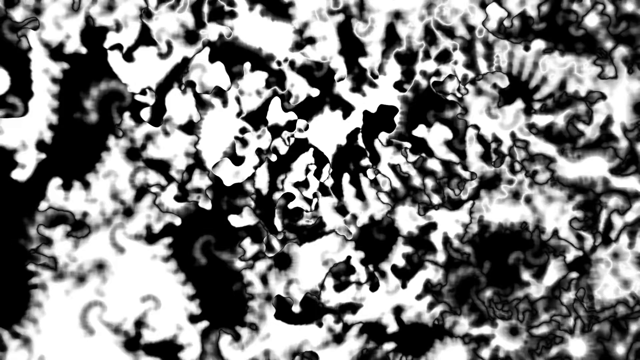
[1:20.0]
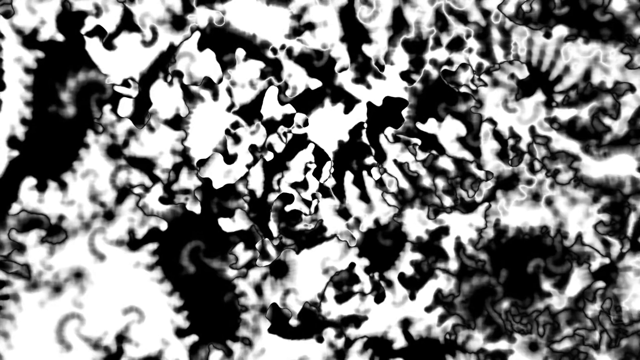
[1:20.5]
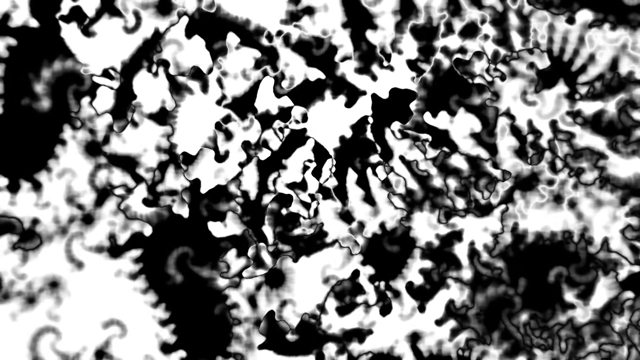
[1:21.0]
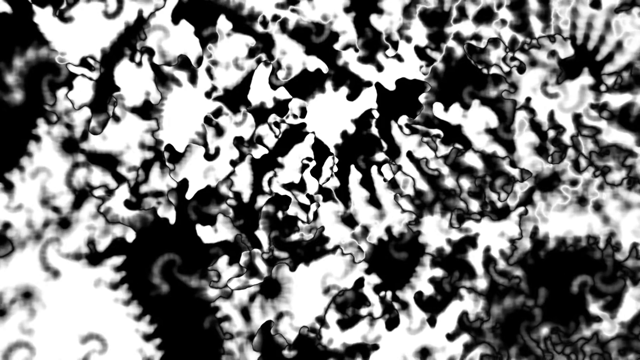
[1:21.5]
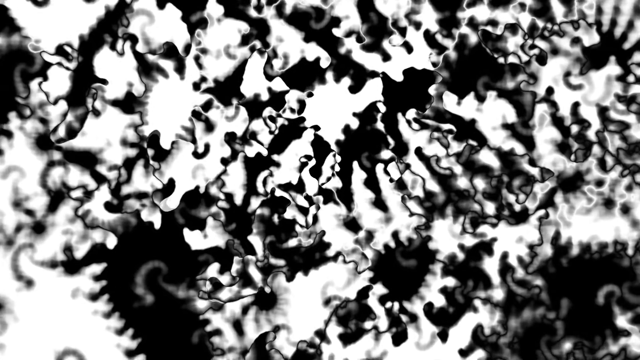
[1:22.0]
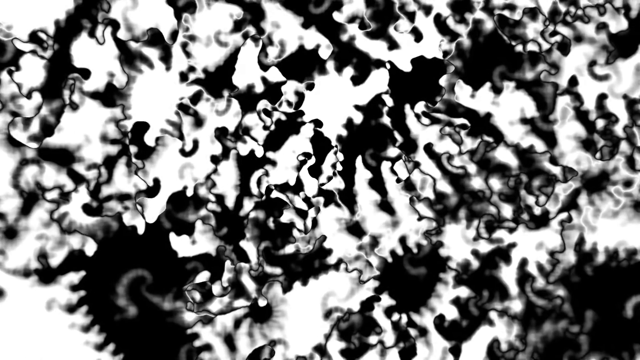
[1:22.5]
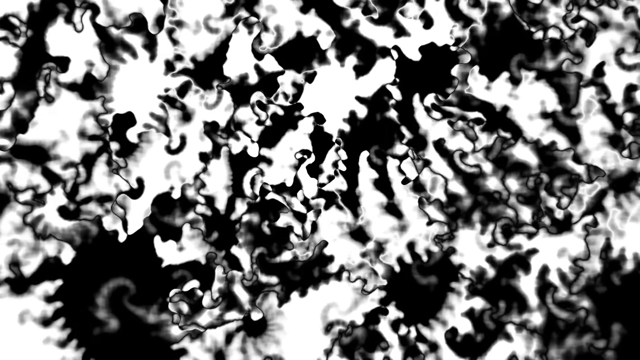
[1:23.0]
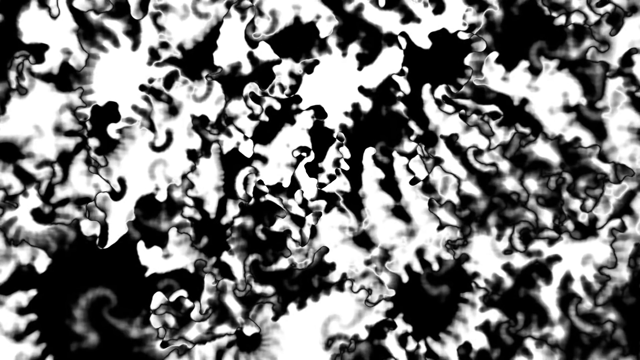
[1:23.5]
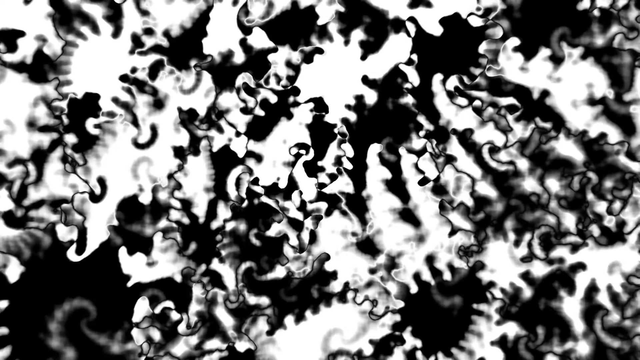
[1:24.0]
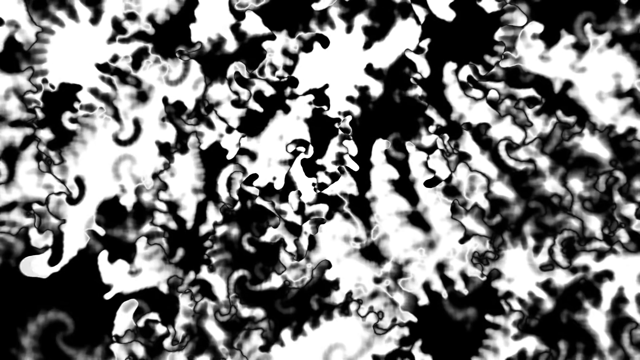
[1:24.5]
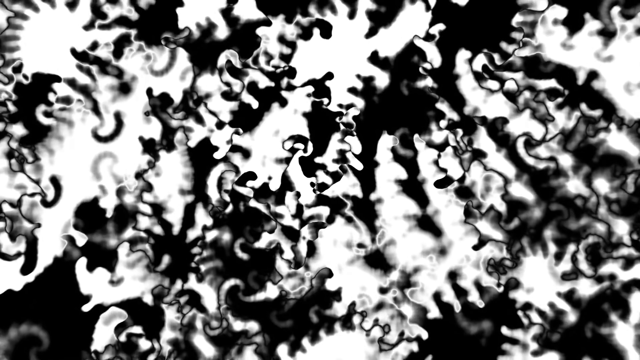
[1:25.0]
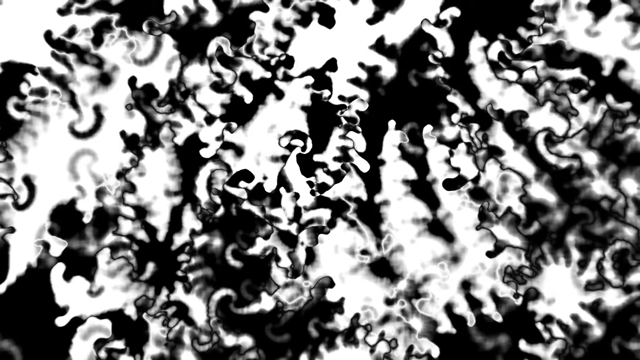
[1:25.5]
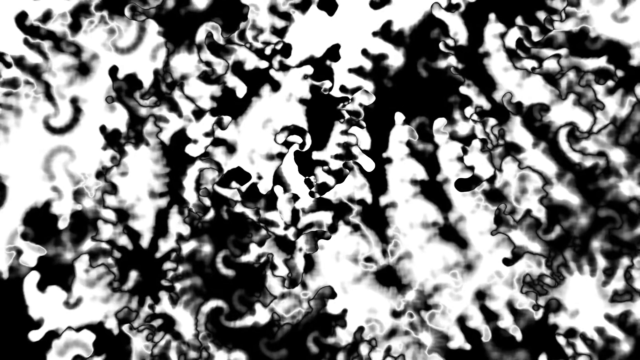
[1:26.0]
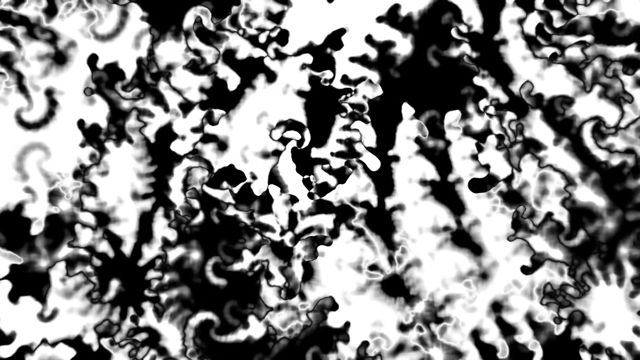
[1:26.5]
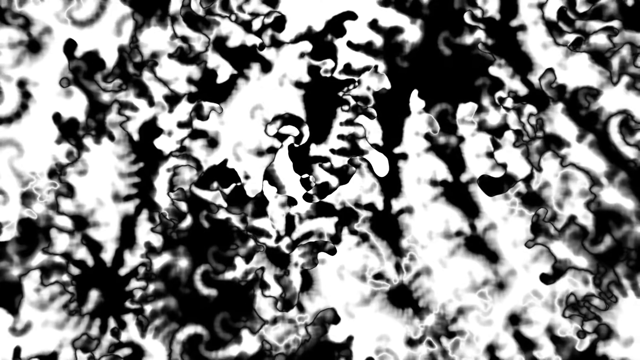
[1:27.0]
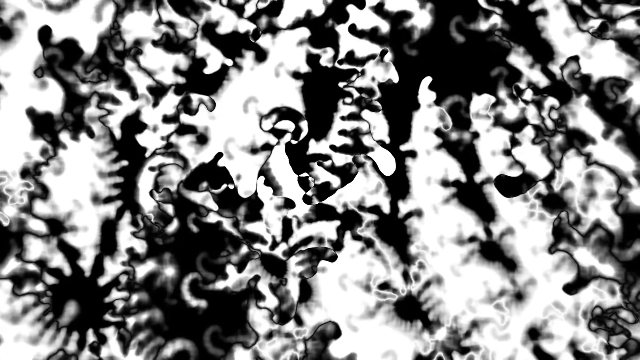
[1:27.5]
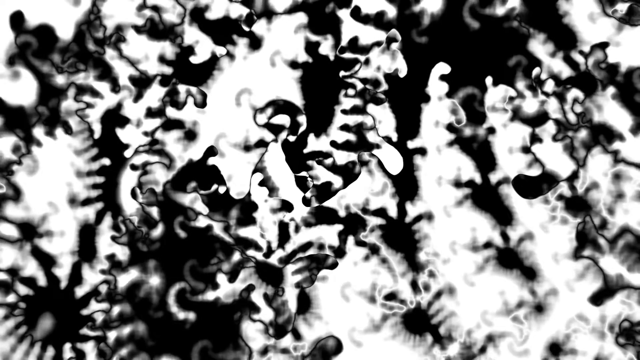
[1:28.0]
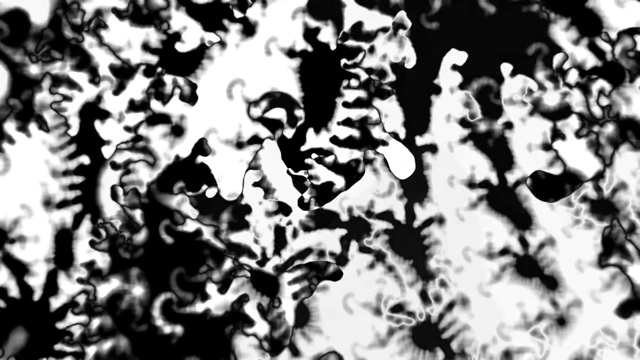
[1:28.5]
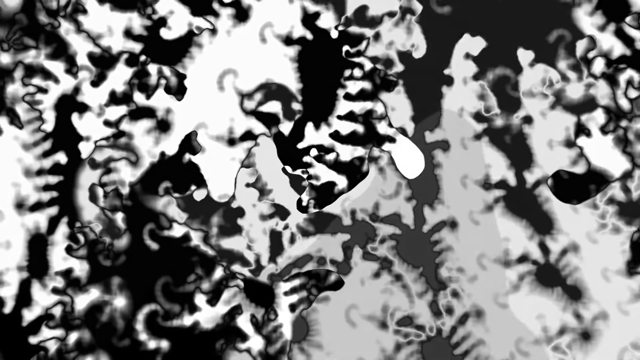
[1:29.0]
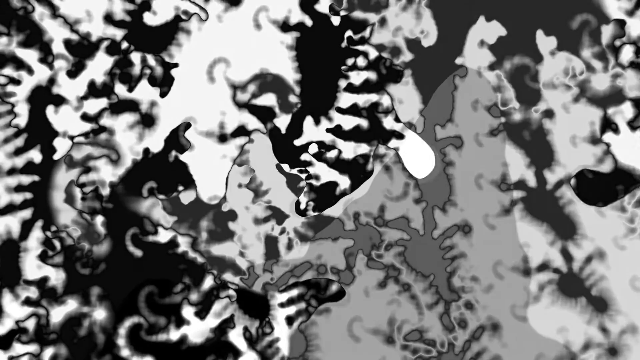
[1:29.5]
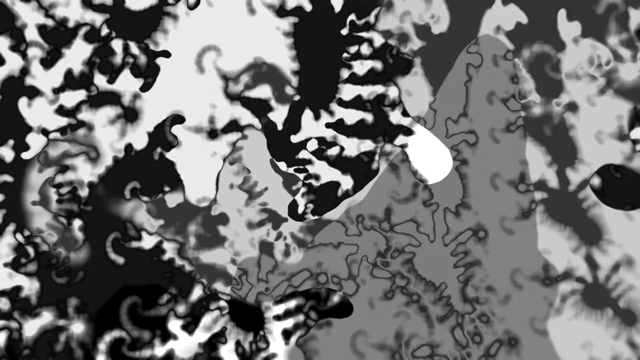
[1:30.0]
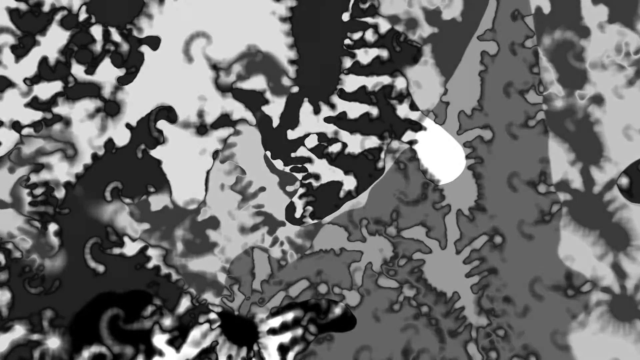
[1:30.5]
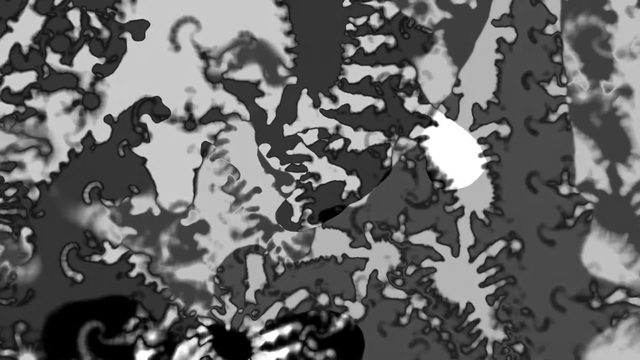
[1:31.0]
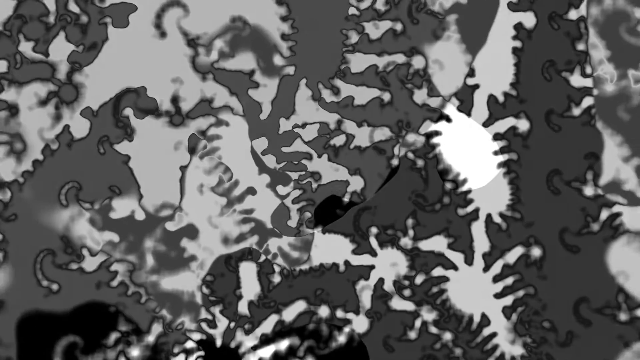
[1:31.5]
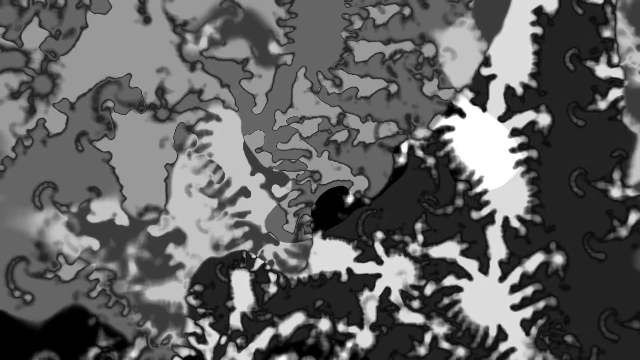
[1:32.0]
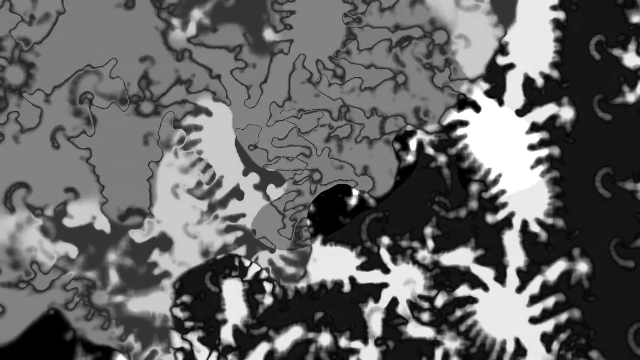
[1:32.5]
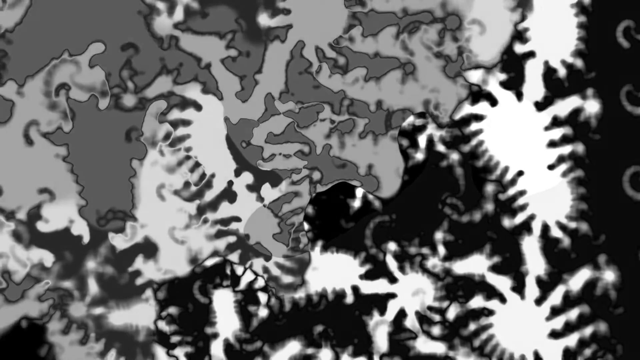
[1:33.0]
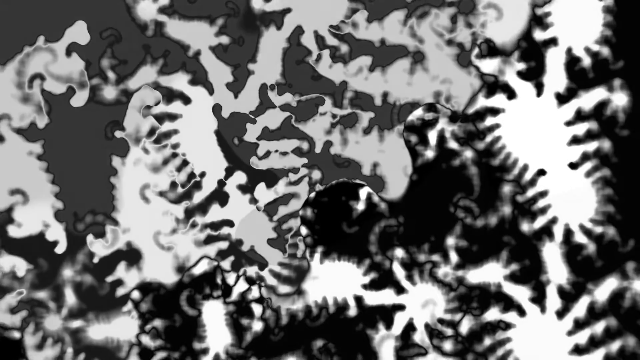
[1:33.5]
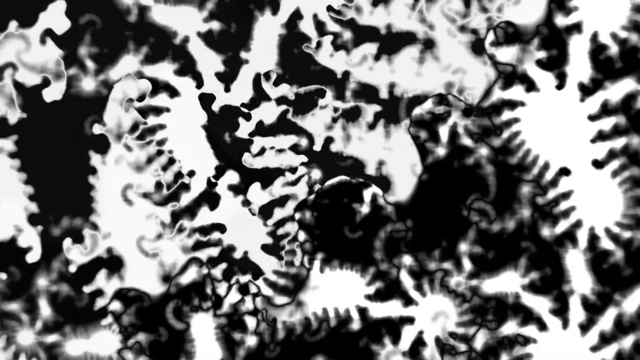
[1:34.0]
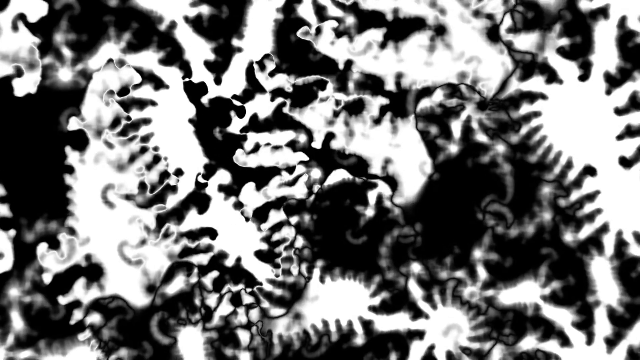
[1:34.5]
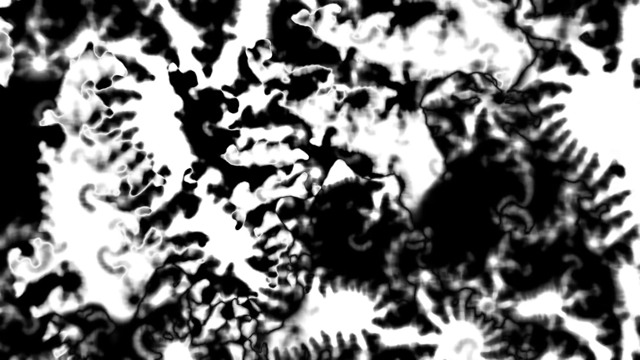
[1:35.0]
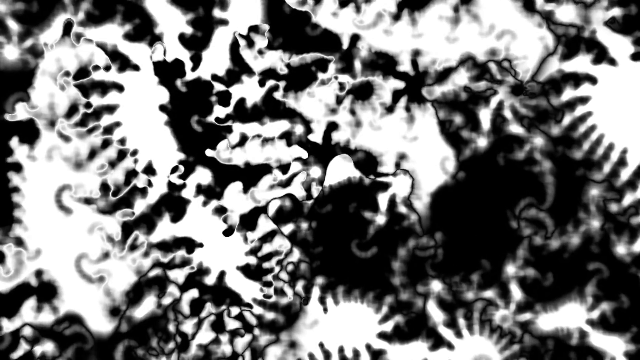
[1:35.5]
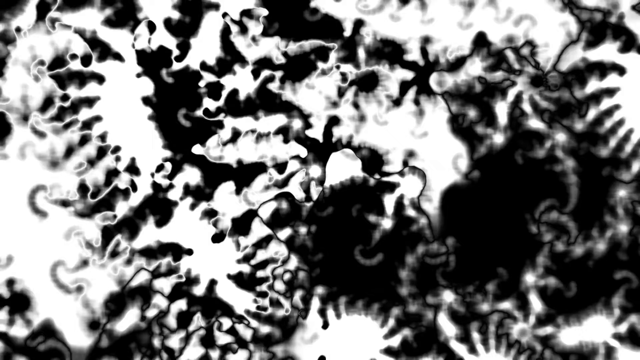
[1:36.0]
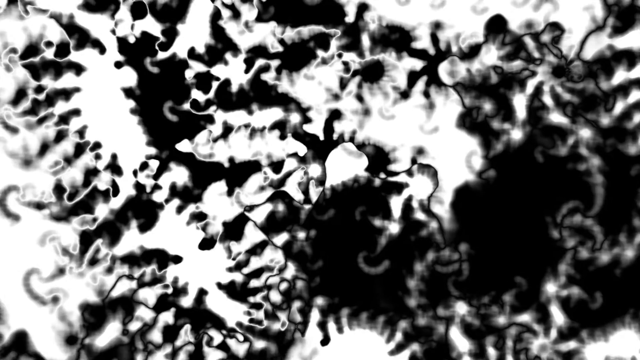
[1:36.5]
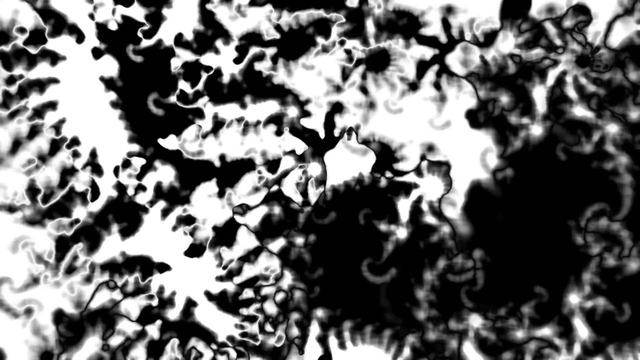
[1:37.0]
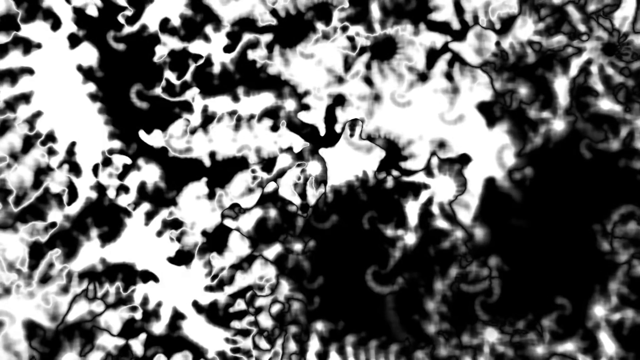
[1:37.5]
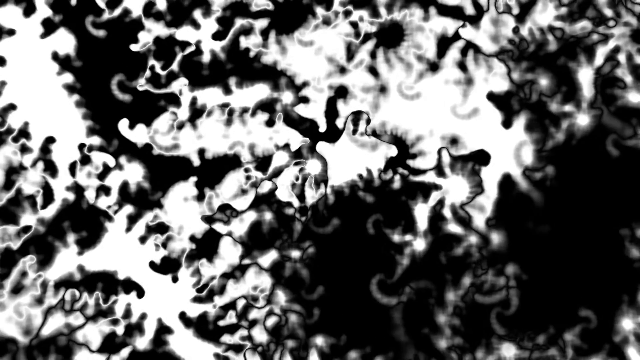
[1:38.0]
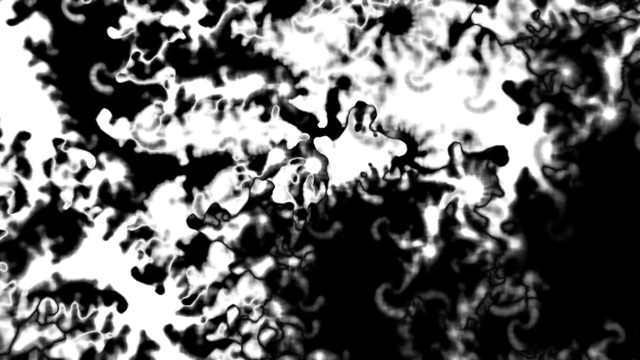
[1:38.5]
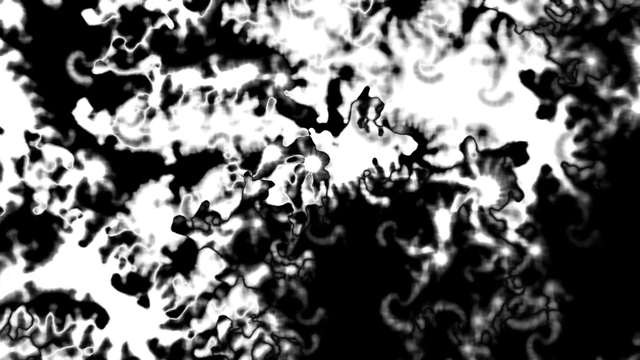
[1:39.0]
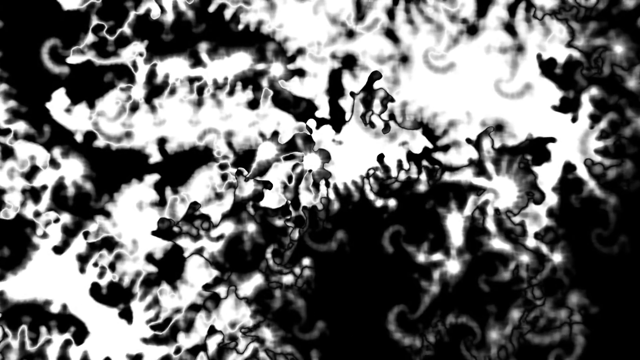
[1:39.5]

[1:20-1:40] The view seems to keep zooming, and everything turns white, red and gray.